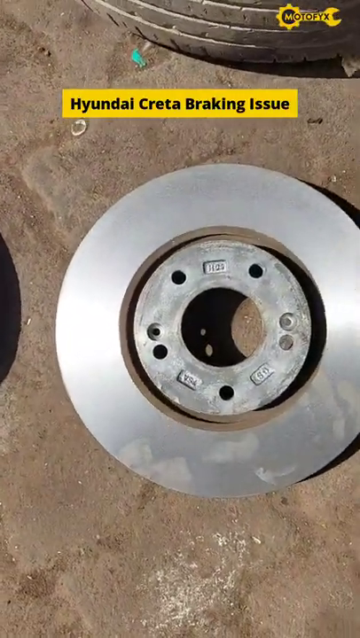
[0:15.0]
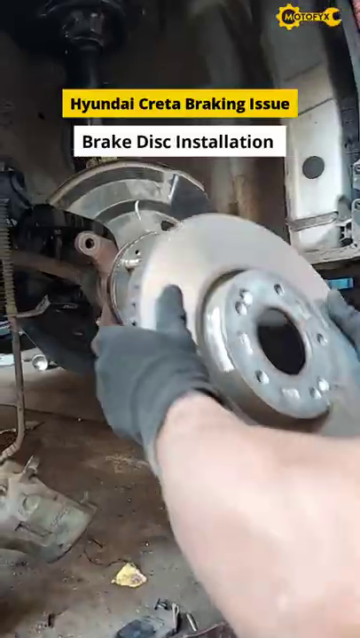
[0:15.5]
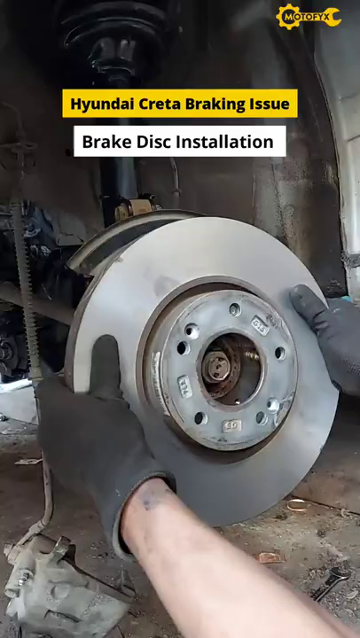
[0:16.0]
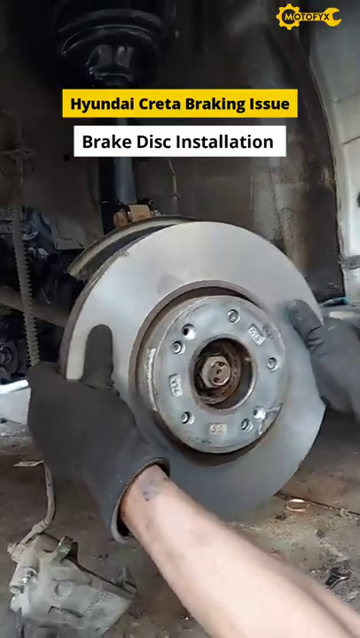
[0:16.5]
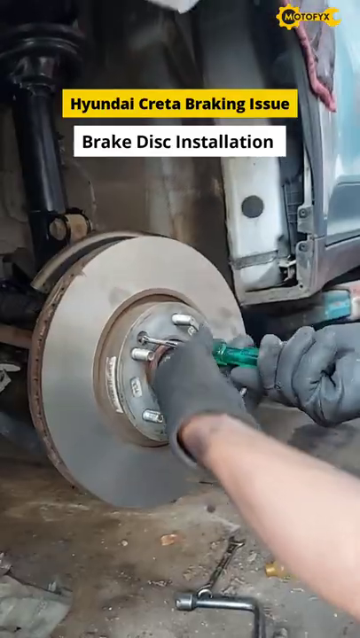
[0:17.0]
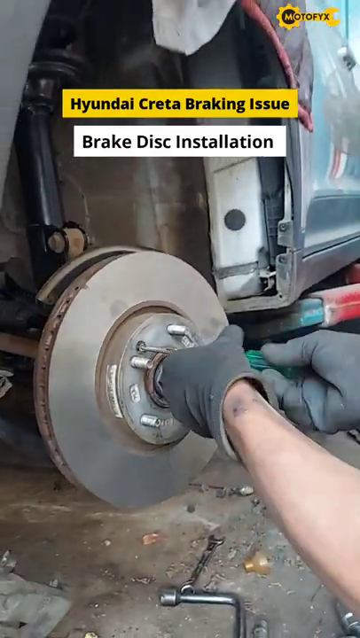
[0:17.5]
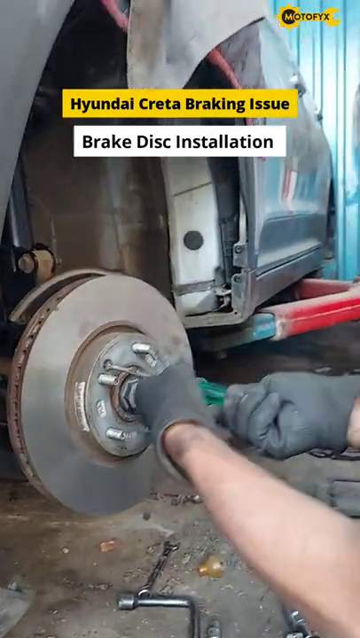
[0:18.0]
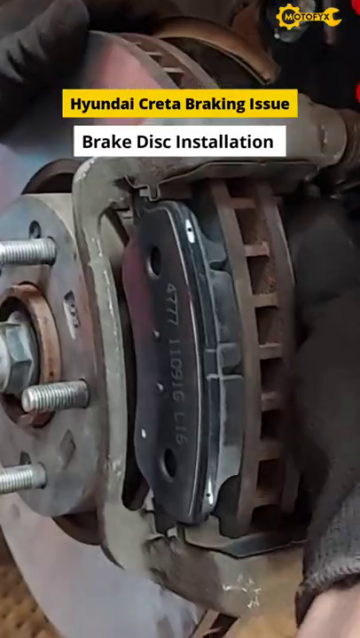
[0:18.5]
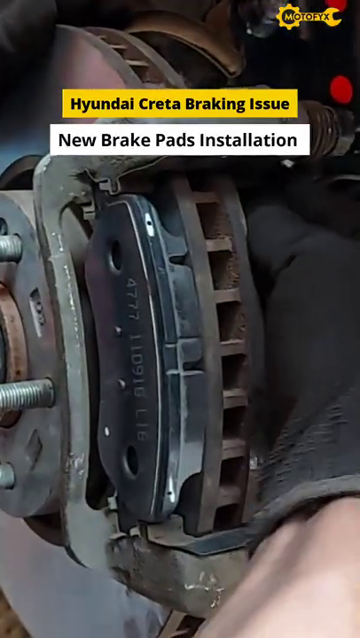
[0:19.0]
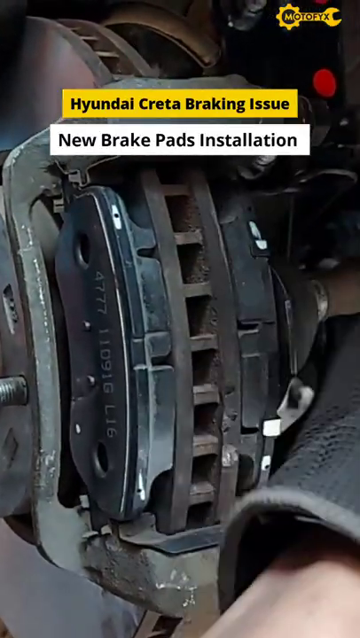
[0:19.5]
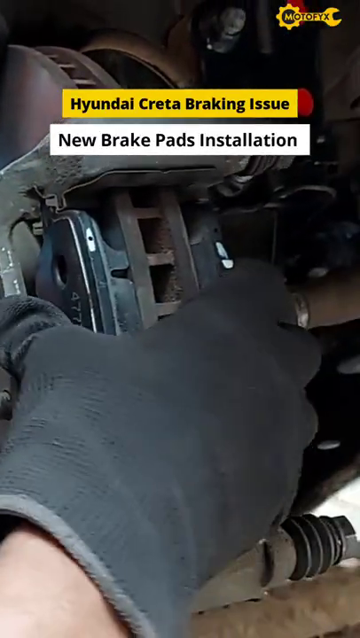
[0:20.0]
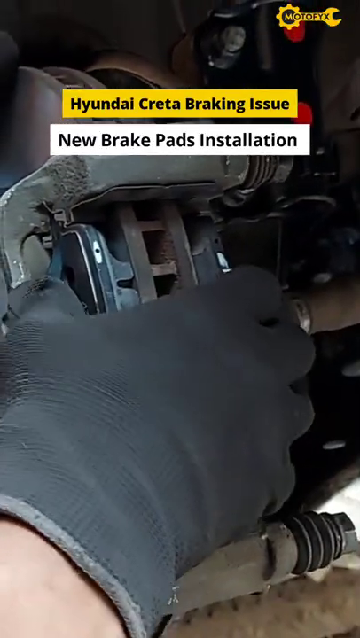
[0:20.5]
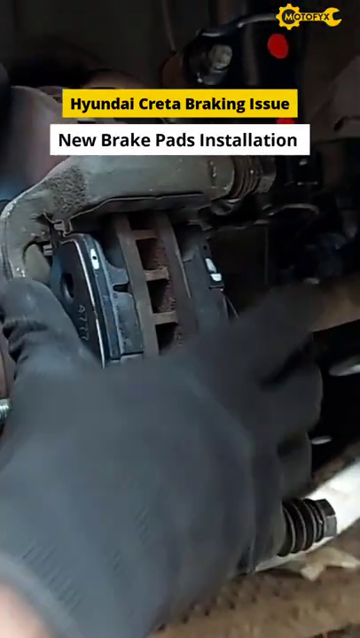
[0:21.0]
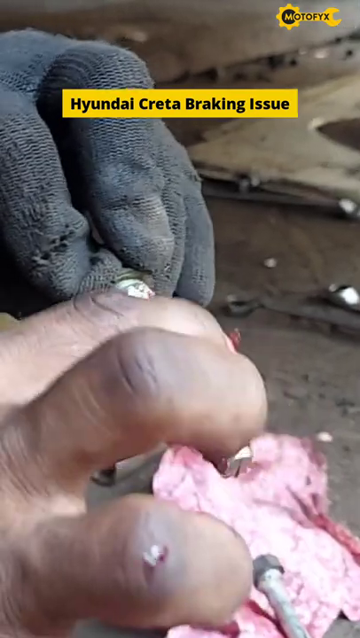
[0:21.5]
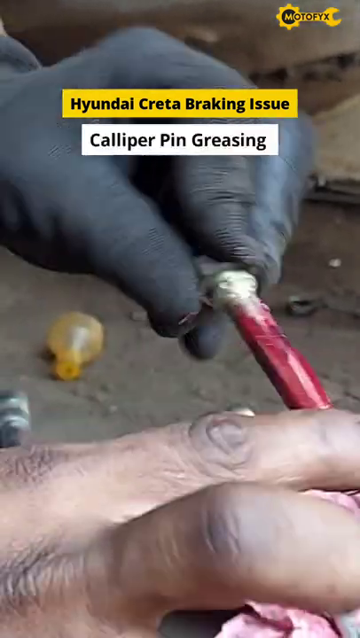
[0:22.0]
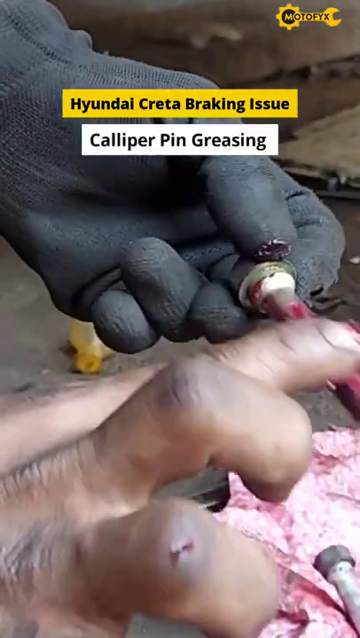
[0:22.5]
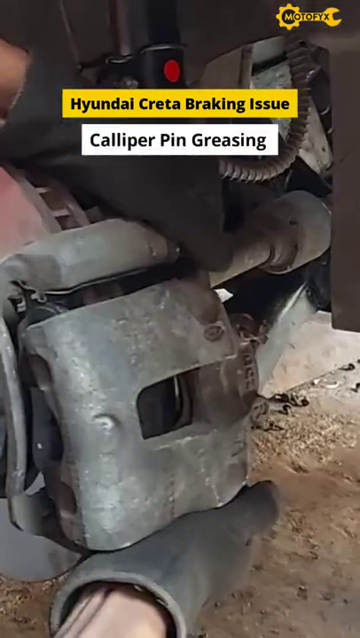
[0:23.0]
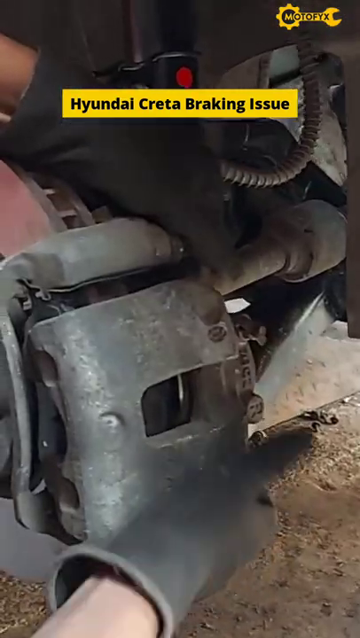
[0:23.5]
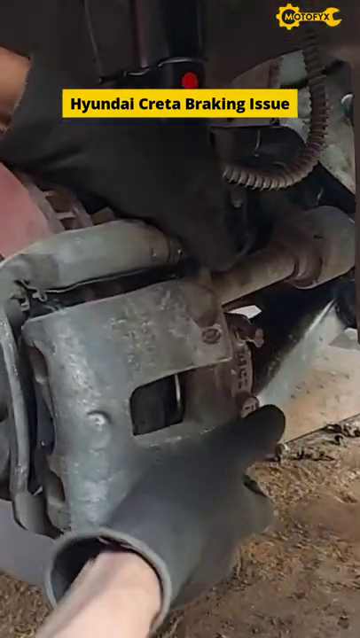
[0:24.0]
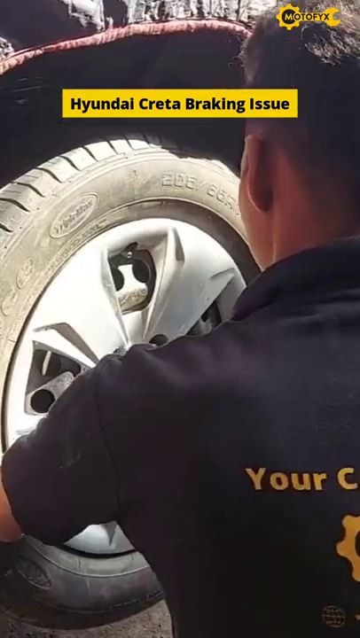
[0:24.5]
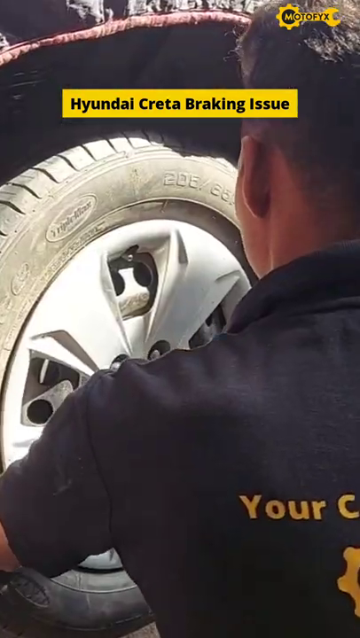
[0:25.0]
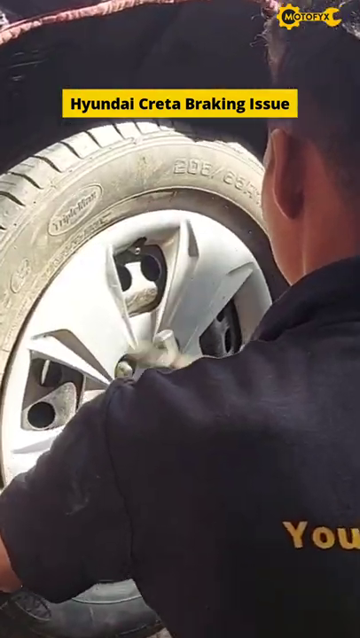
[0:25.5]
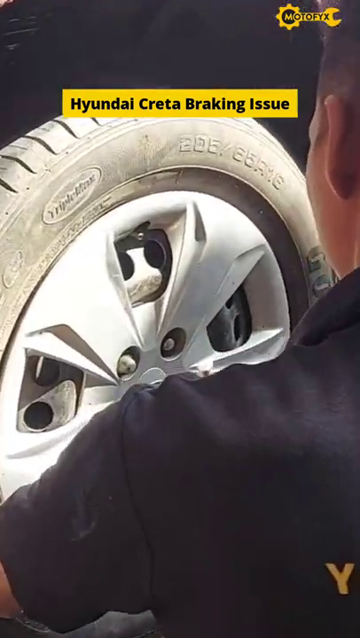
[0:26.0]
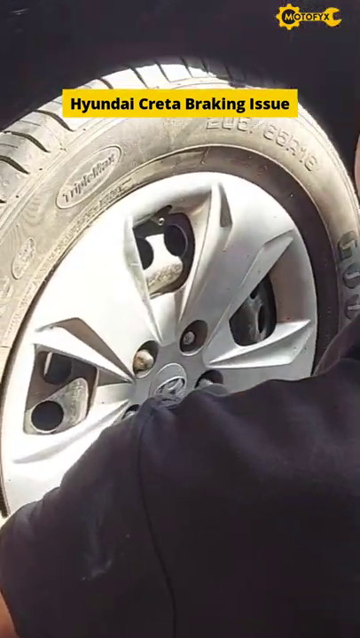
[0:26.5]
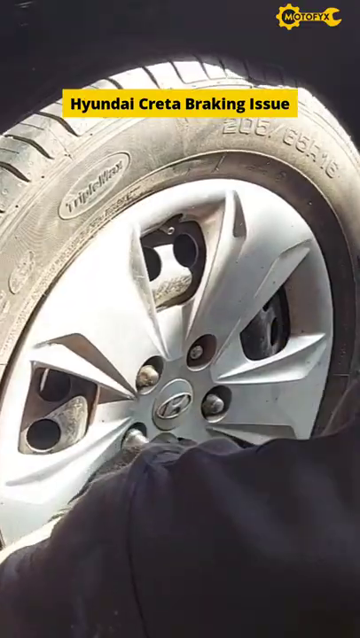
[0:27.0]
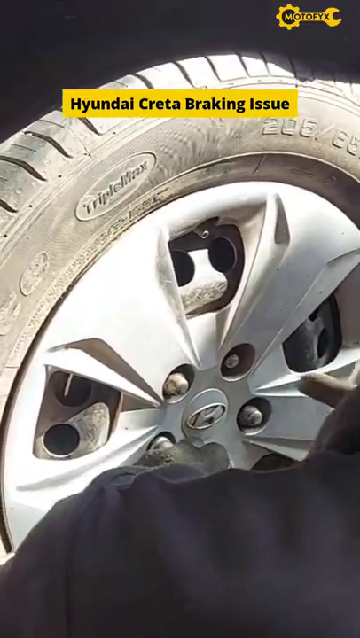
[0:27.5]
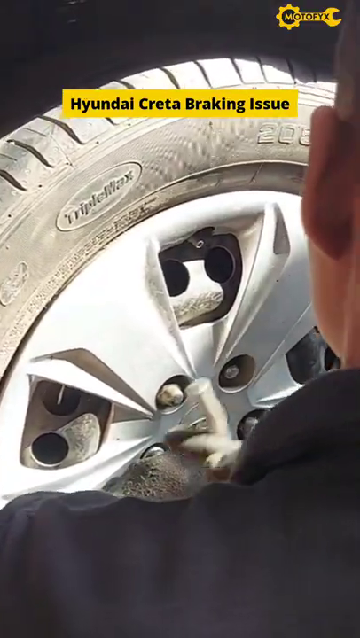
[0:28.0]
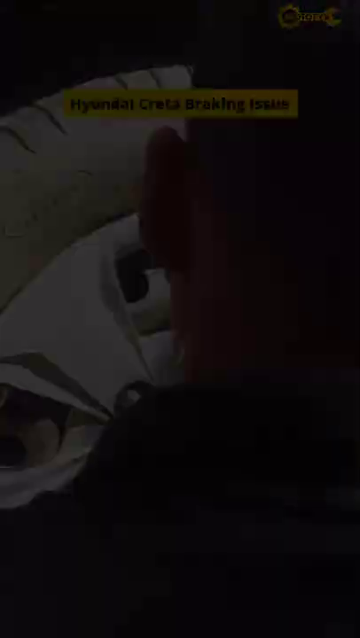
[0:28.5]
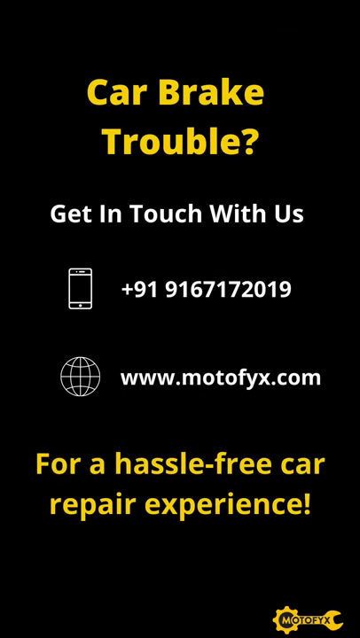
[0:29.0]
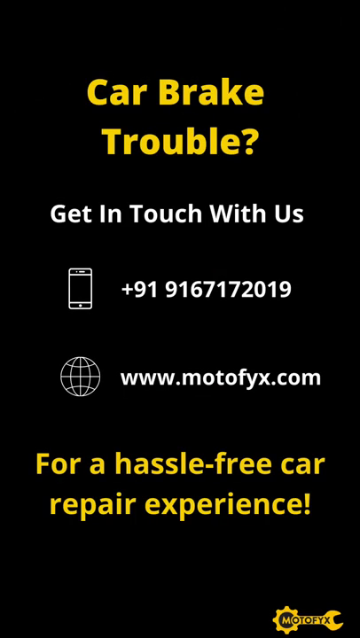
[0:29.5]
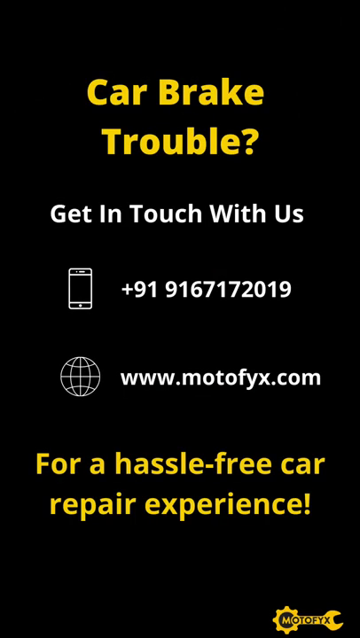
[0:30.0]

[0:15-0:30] After trimming the brake pads, the person starts installing them back onto the vehicle, then uses a screw to screw it back into place. Text reads "new brake pad installation" as they grease the caliper pin. A view of the person's back shows them wearing a black t-shirt while screwing the wheel back in. At the end, text reads "car brake trouble get in touch with us," along with a WhatsApp number and a website. At the bottom, in yellow font with exclamation points, it says "for a hassle free car repair experience."